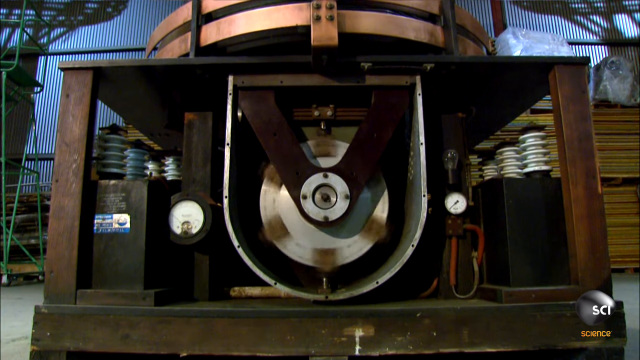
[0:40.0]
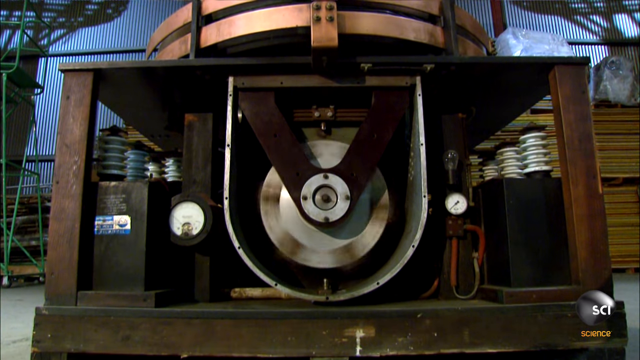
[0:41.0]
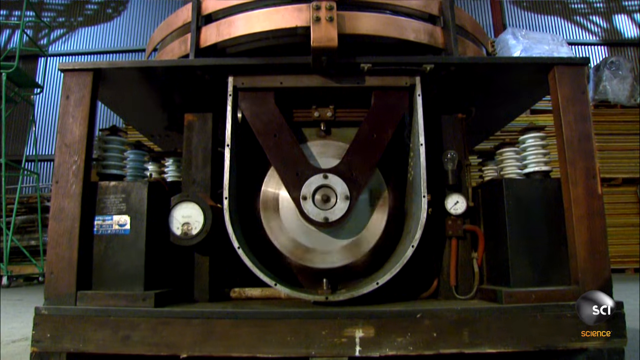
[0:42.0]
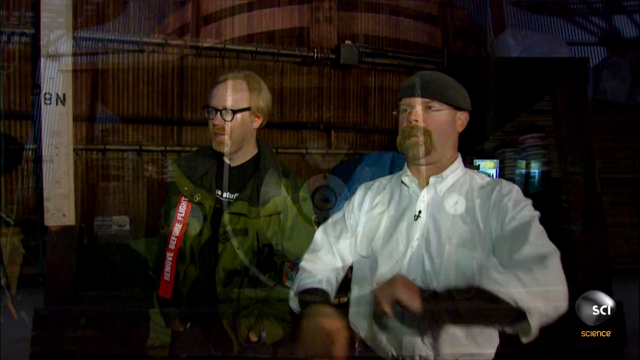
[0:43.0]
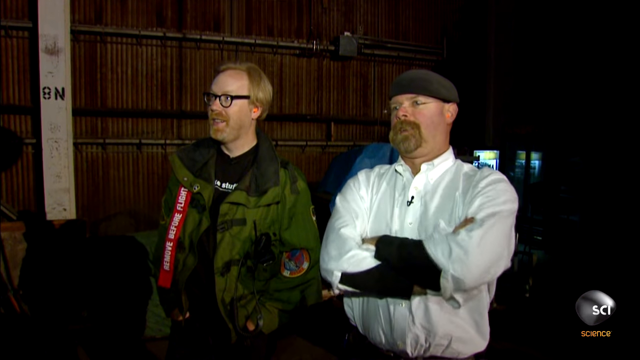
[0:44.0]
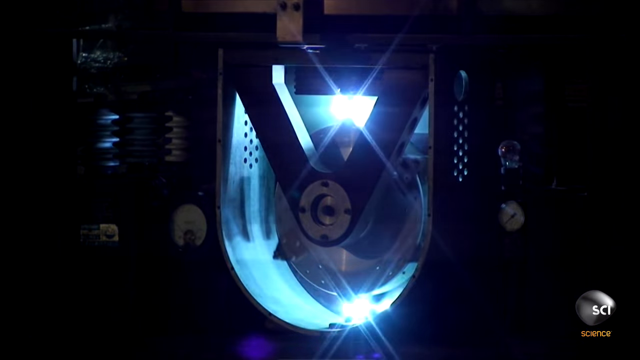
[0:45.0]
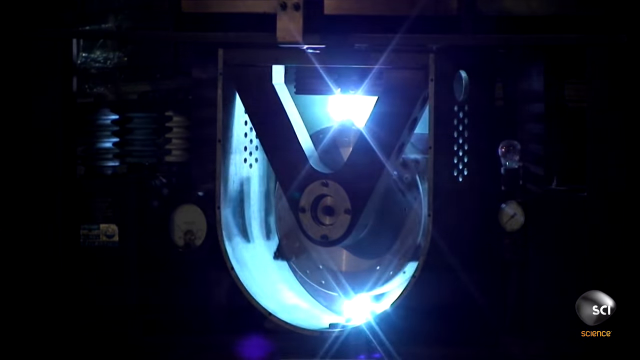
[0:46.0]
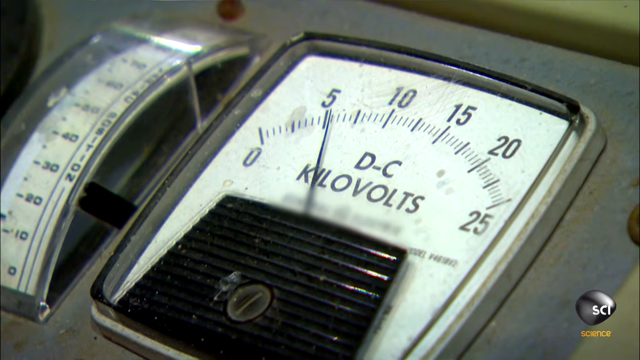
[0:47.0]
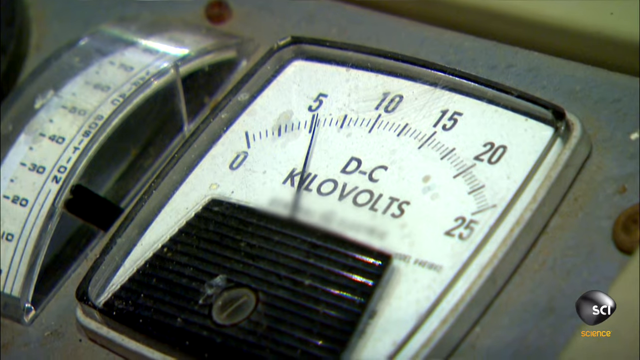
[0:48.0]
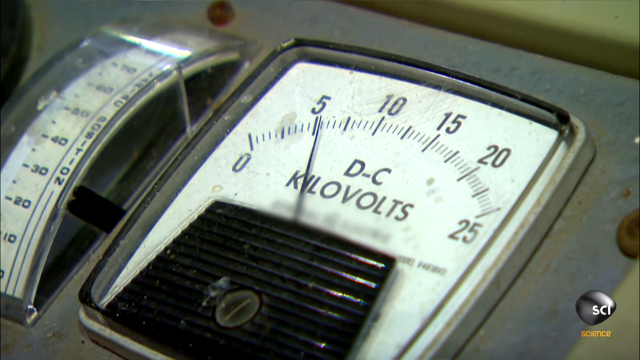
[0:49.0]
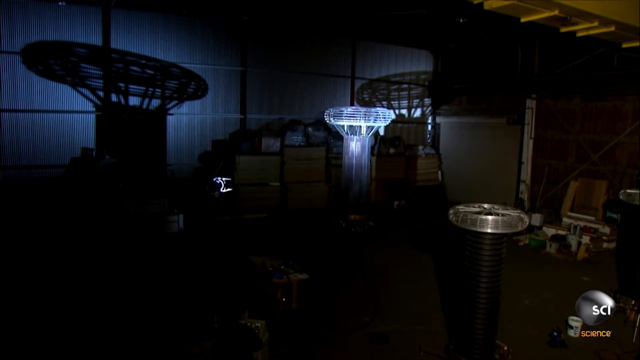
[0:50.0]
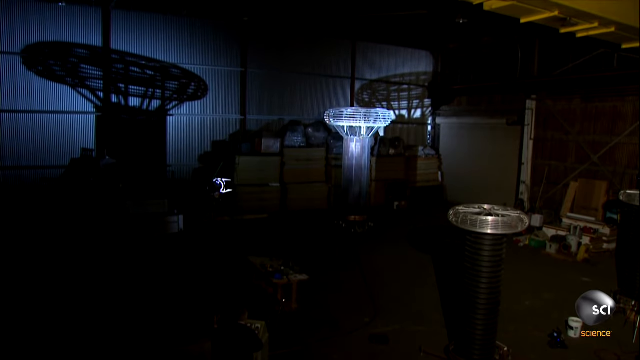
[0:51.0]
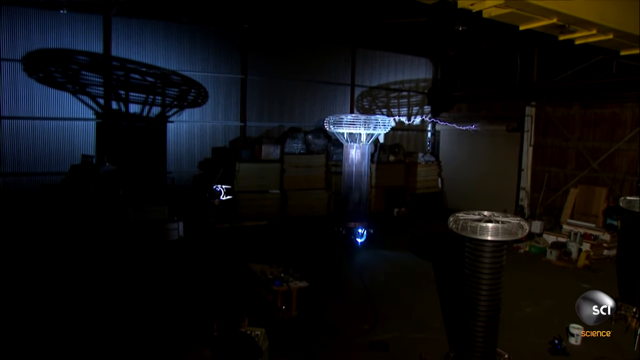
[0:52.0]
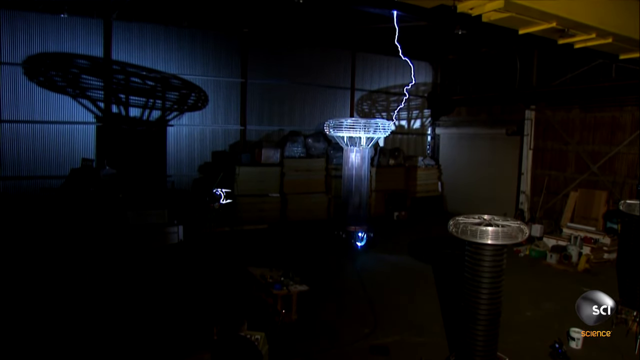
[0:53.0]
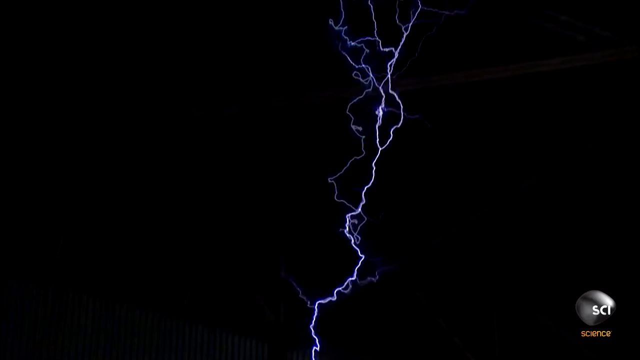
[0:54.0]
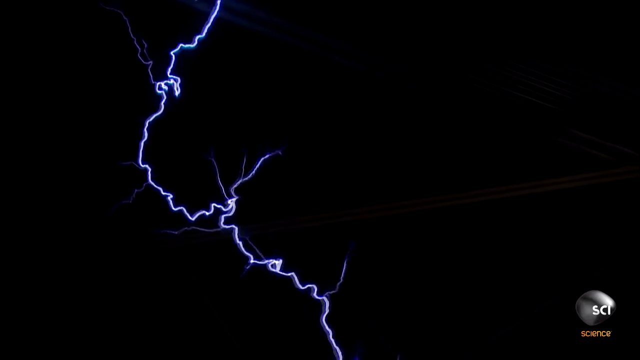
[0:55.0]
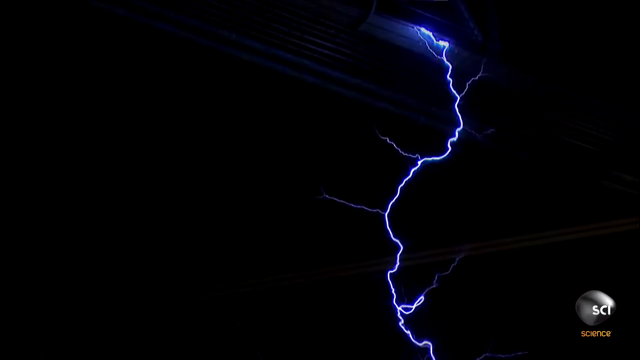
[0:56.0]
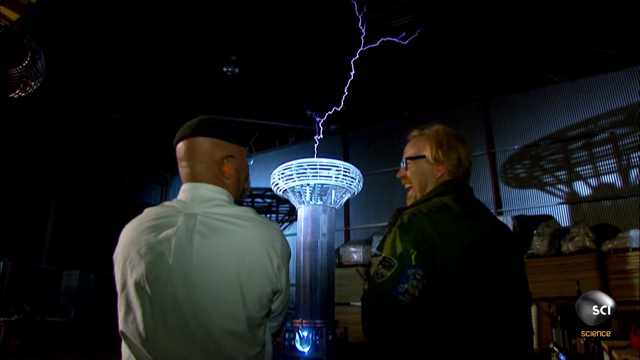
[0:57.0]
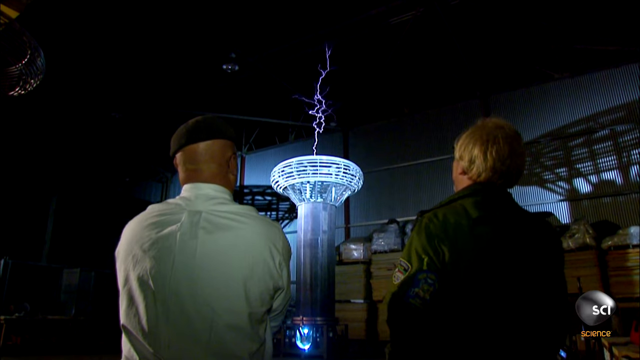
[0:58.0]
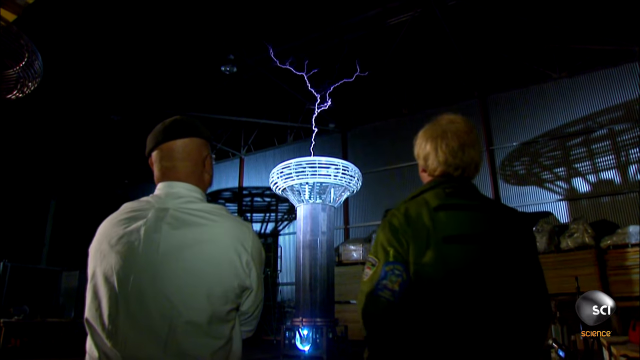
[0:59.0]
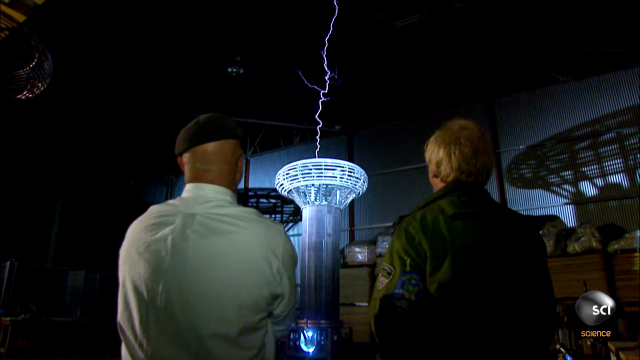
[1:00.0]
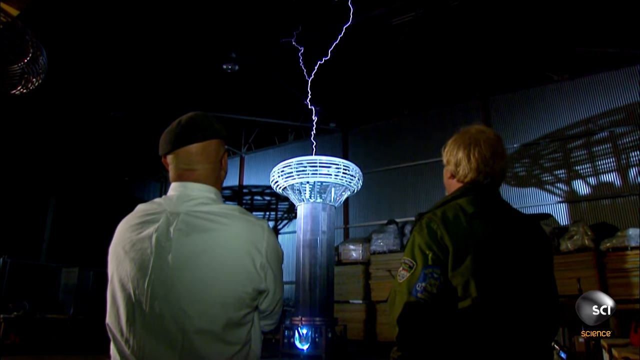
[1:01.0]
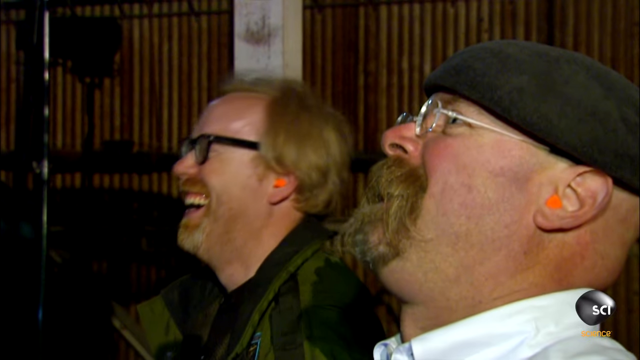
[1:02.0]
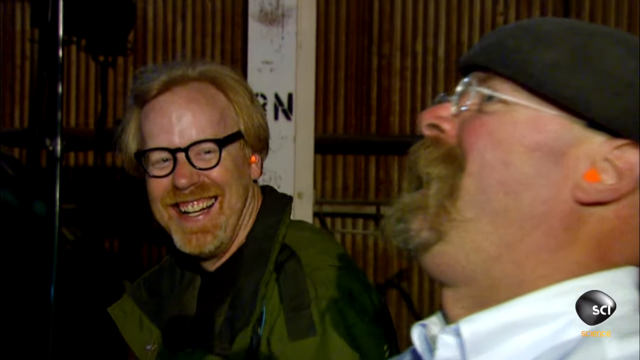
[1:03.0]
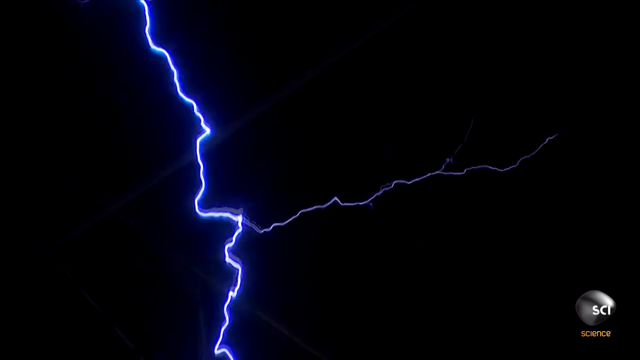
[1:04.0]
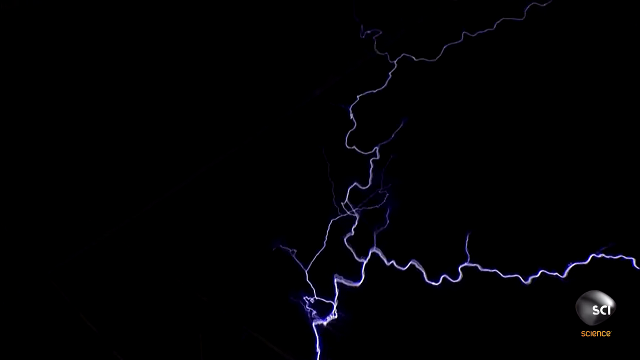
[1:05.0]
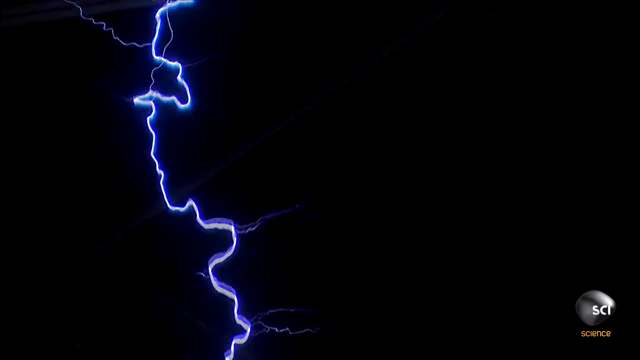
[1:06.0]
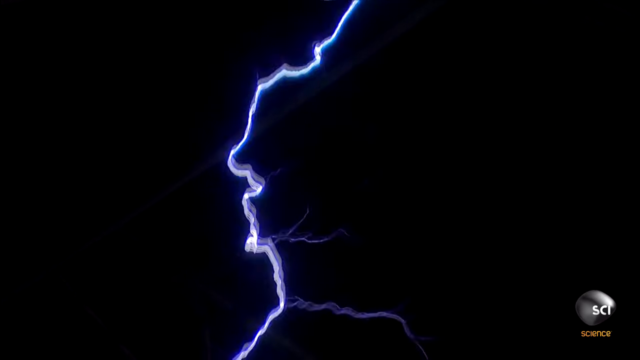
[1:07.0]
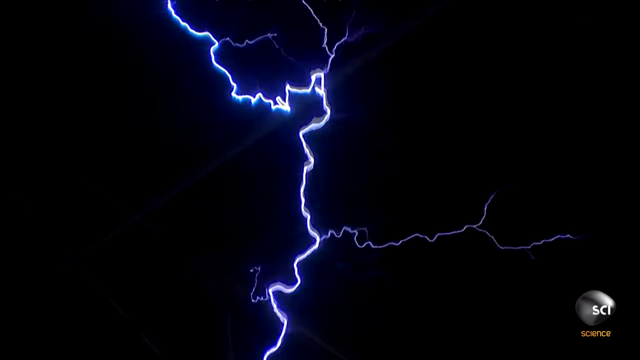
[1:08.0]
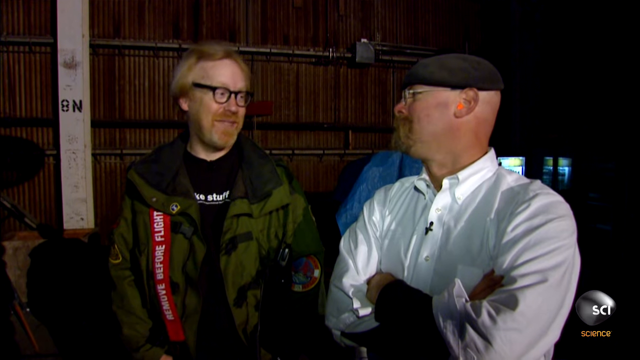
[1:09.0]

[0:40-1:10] A big machine has eight tubing-like cylinders that go in and out; on one side they look blue and on the other side they look white. In the middle is a metal wheel spinning around and around, going faster. The two co-hosts are shown: the one in the white shirt crosses his arms and the other smiles. The view returns to the wheel, now spinning pretty fast. A white light flashes, and a reading of DC kilovolts sits at either five or six. Everything goes dark, and something is lit up that looks like a transparent jellyfish but is made of metal or something stronger. Electricity shoots out from it, upward and outward, like lightning. The two co-hosts stare at it, laughing and smiling.